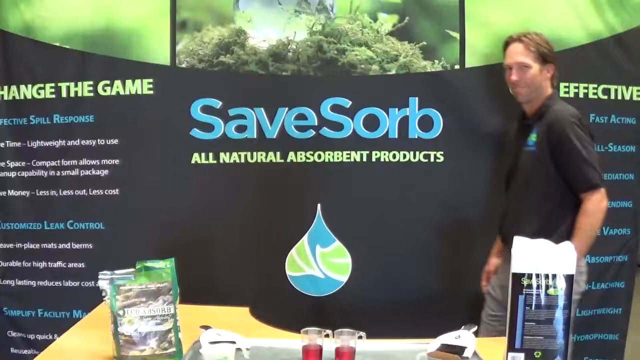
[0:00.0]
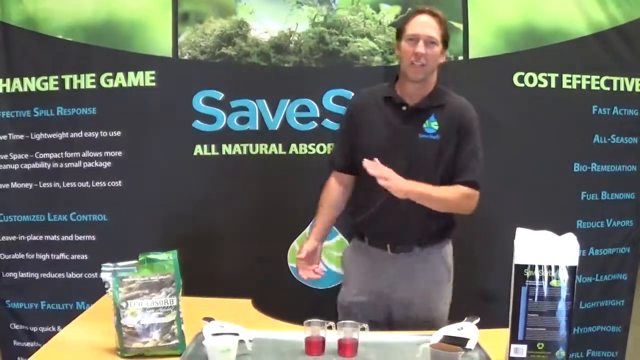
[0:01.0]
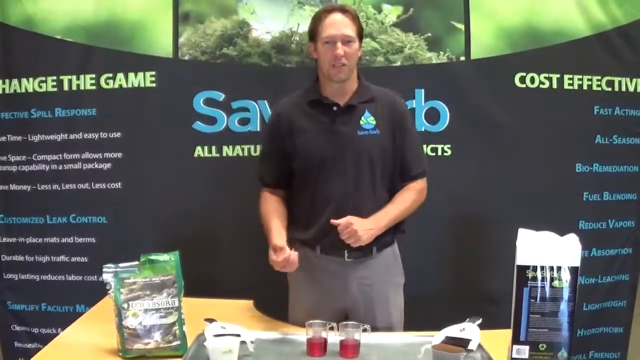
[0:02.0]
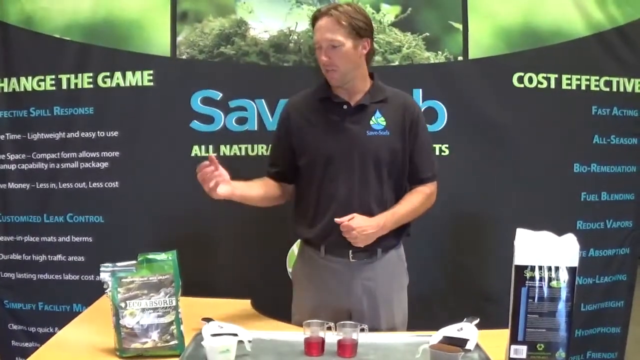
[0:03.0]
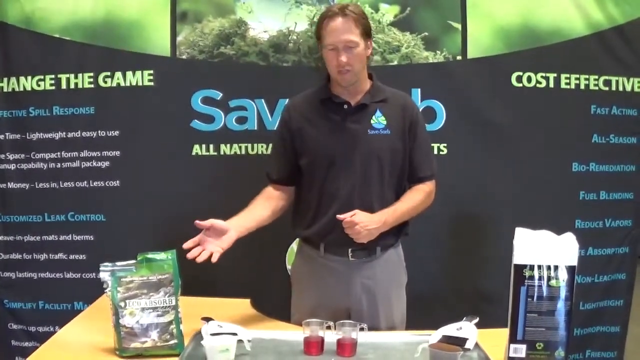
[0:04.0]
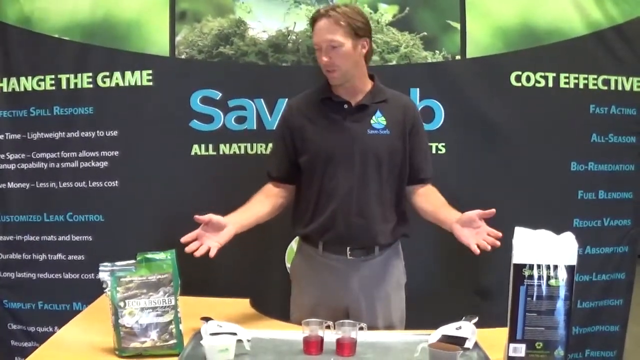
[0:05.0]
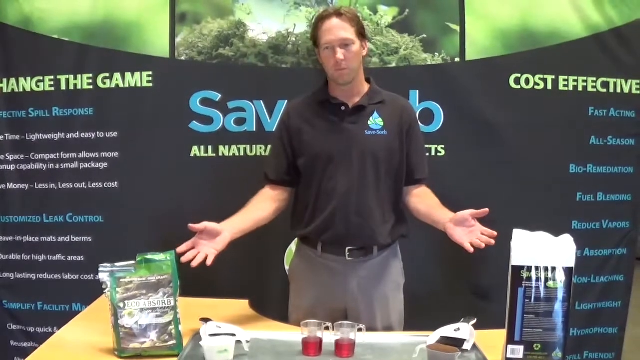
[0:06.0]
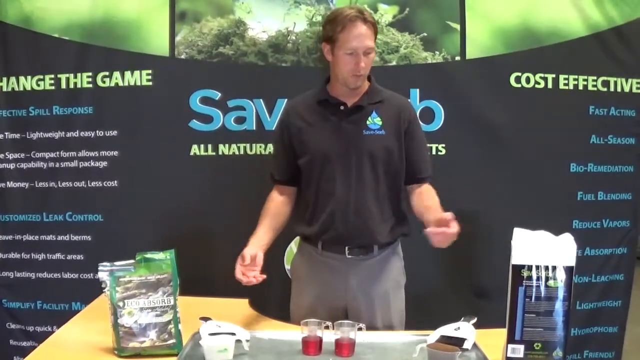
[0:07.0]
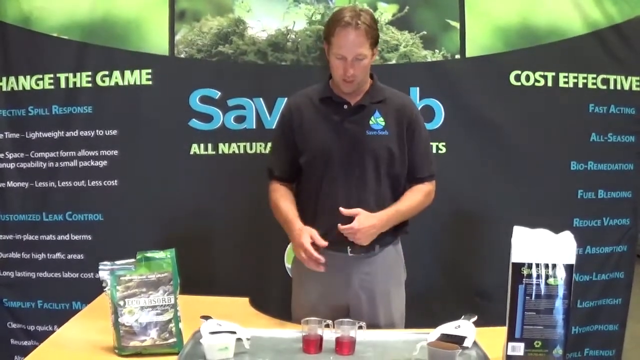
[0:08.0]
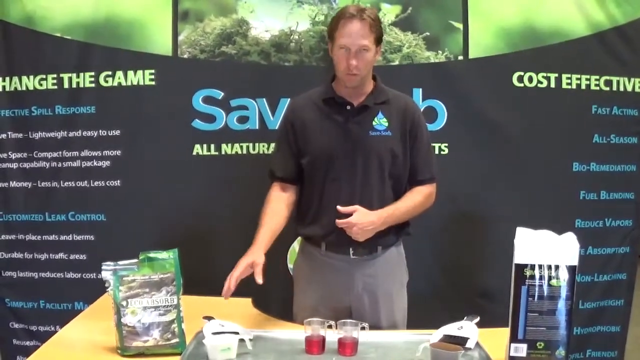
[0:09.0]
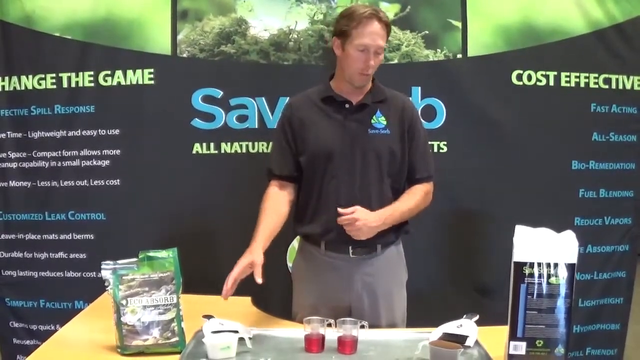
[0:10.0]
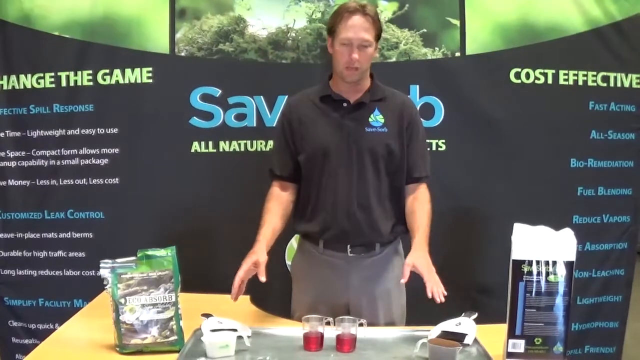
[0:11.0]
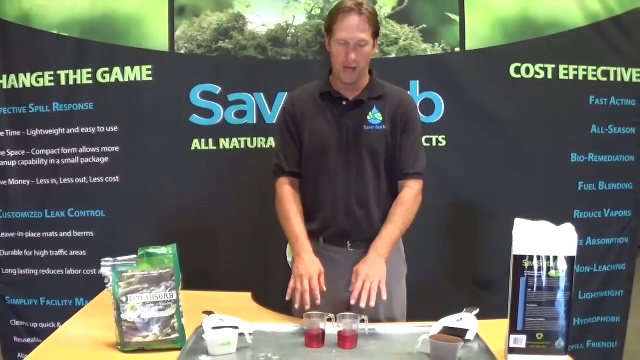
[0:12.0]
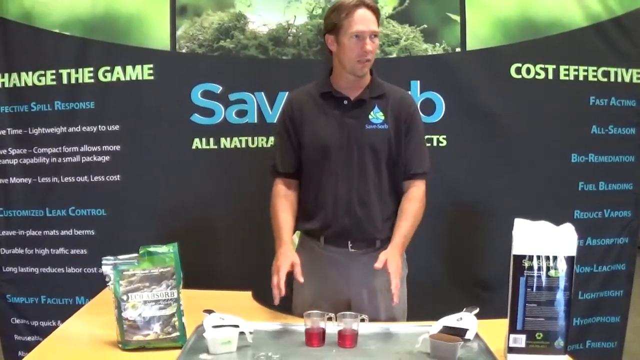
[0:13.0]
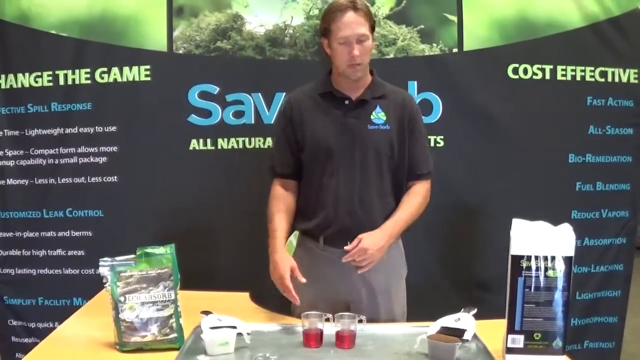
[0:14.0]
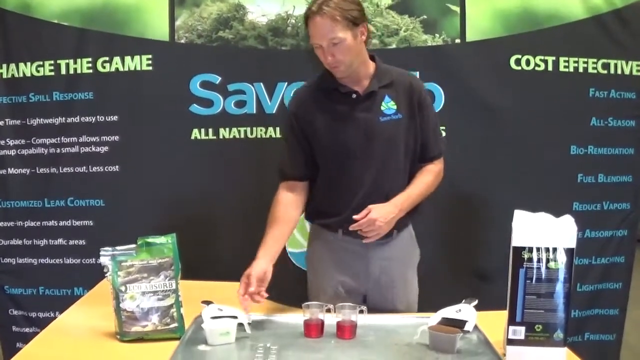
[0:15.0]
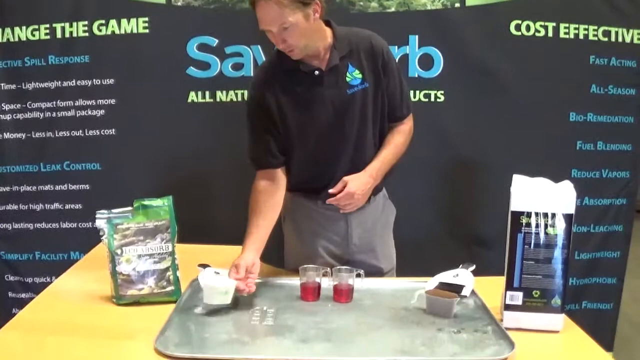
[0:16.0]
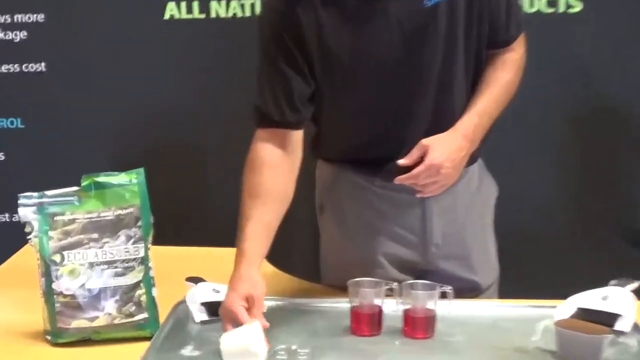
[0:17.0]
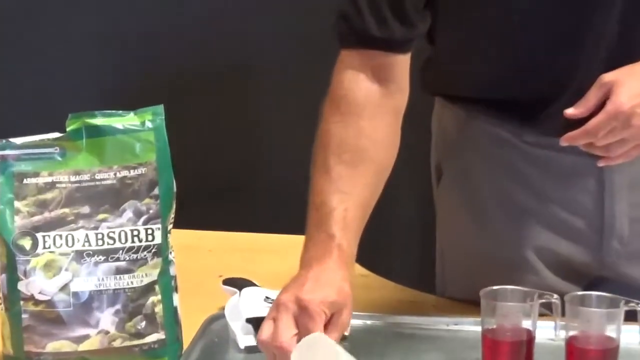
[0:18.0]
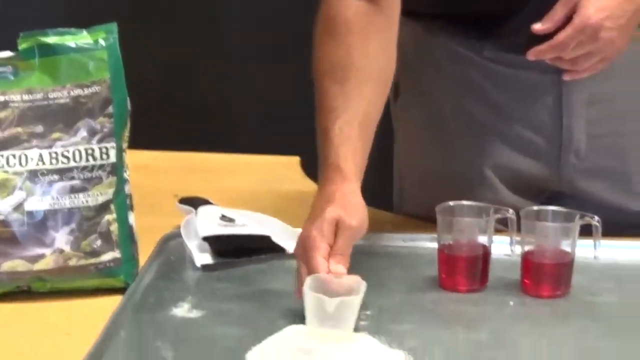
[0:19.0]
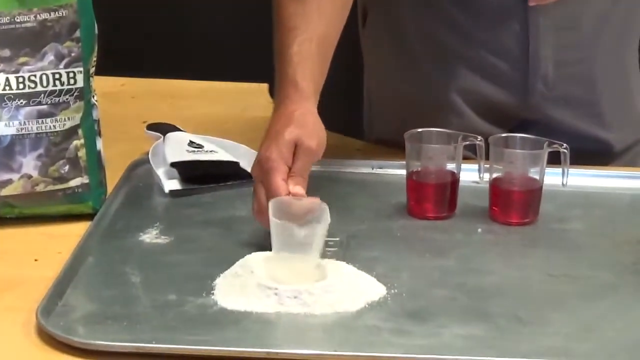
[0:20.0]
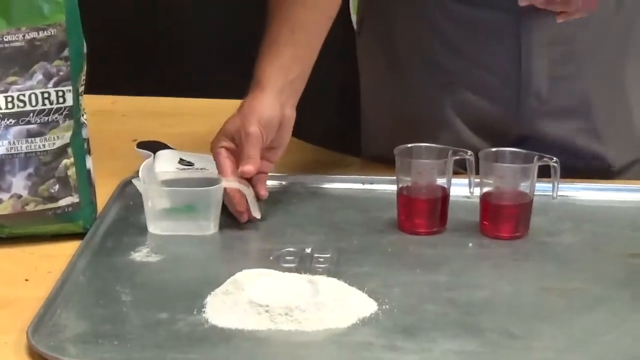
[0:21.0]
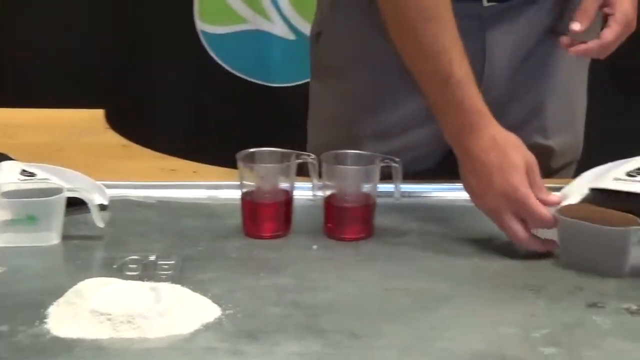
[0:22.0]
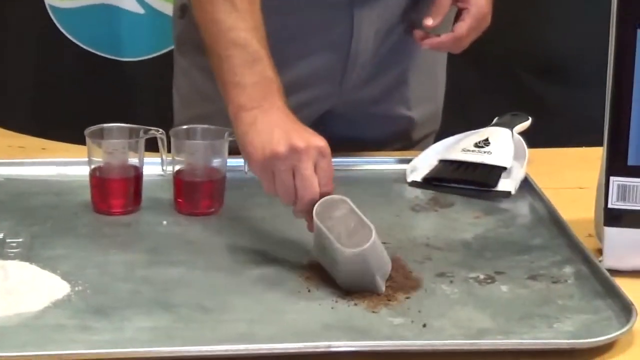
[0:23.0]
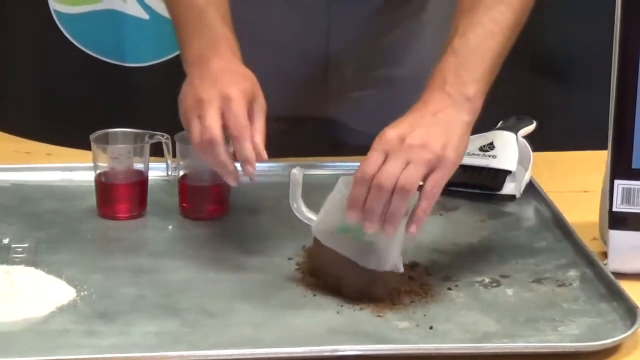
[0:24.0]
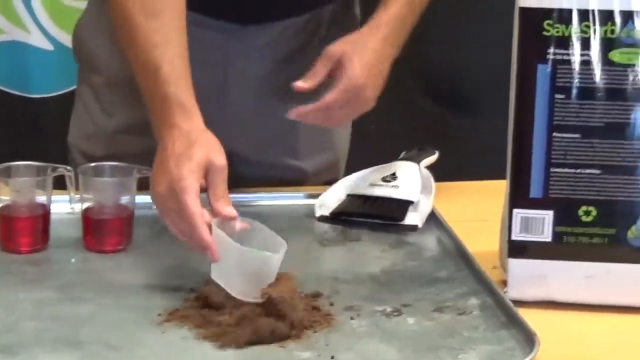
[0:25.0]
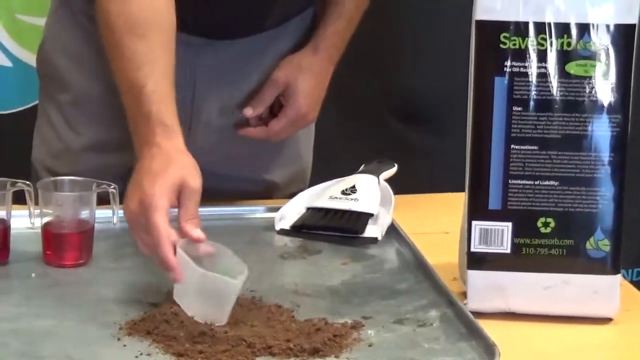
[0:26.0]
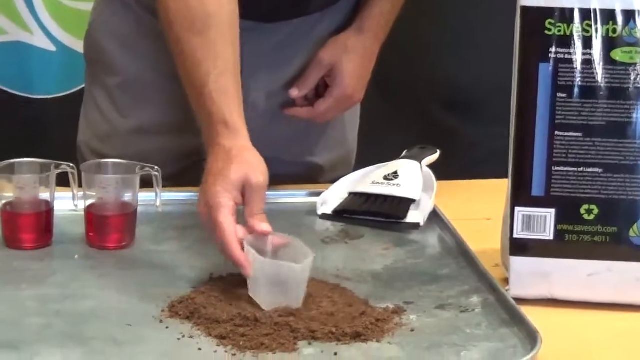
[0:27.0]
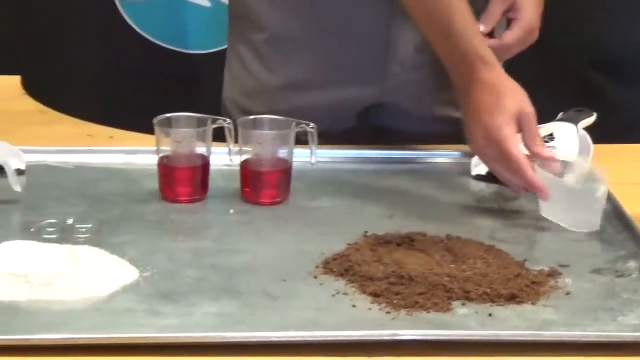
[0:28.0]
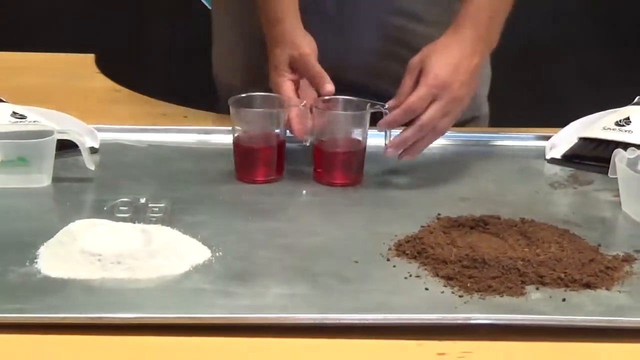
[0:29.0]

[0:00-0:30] The video is a presentation from SaveSorb advertising an all-natural absorbent product. "SaveSorb" appears in blue text and "all-natural different products" in green text. The logo is a water droplet with parts of it covered by green leaves. The overall color theme is blue, green and black, and there is greenery in the banner. Some of the products are on a wooden table. A middle-aged white man walks in, claps his hands and starts demonstrating, showing two products, one on his left and one on his right. The right side of the banner shows that the SaveSorb products are cost-effective and fast acting. He puts a little of each product on a silver pan and spreads it on the pan. There are two bottles of red liquid in a transparent cup on the table, and he is about to pour the liquids onto the absorbent products.